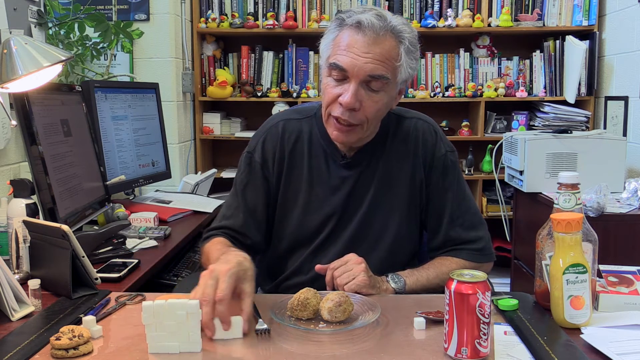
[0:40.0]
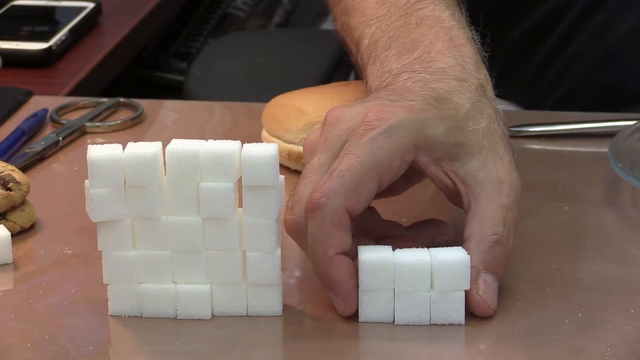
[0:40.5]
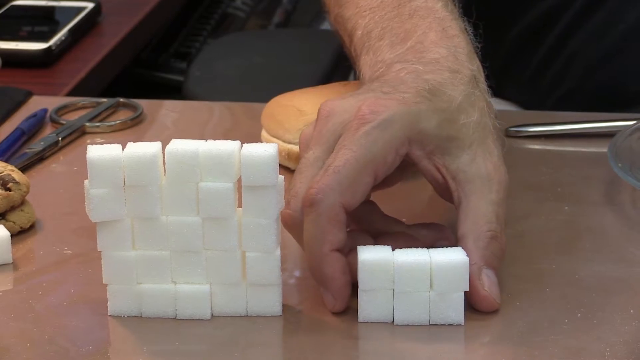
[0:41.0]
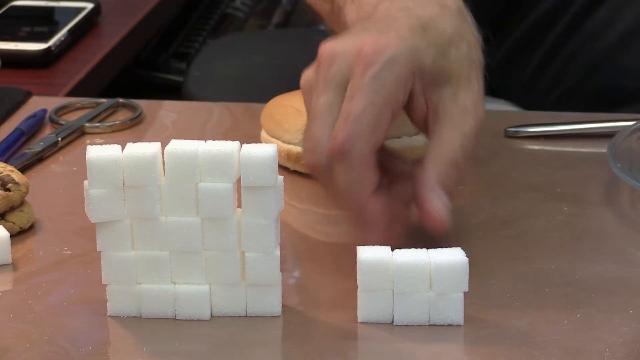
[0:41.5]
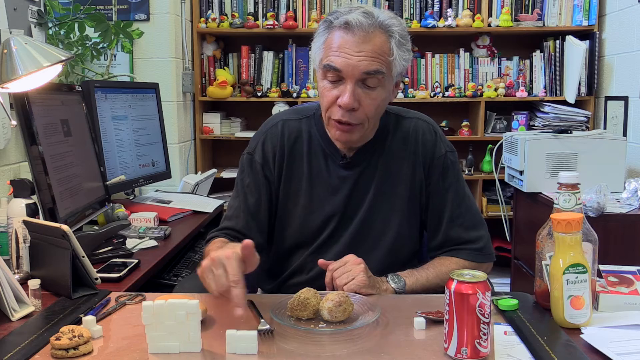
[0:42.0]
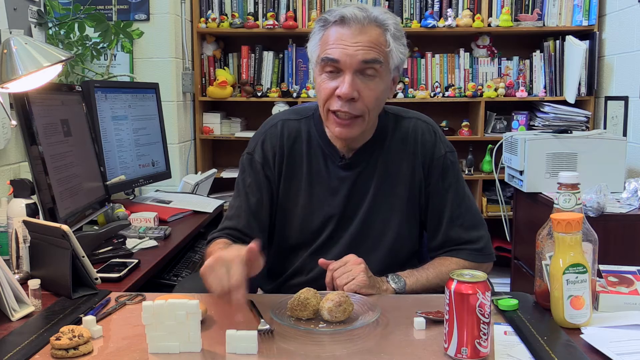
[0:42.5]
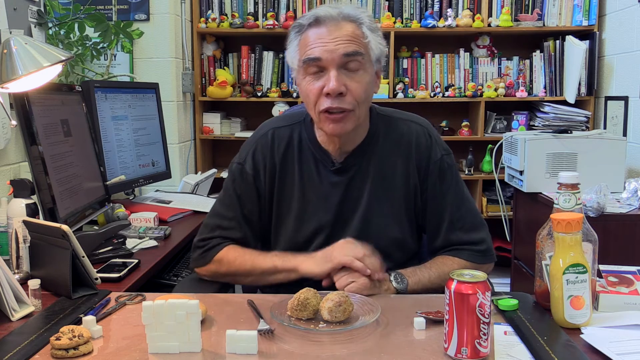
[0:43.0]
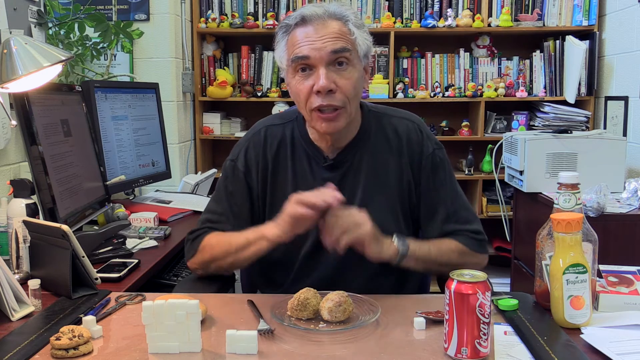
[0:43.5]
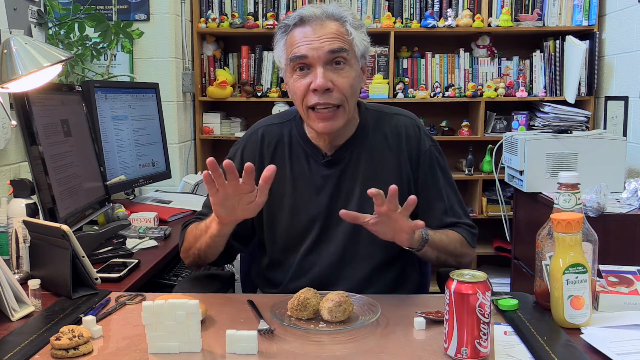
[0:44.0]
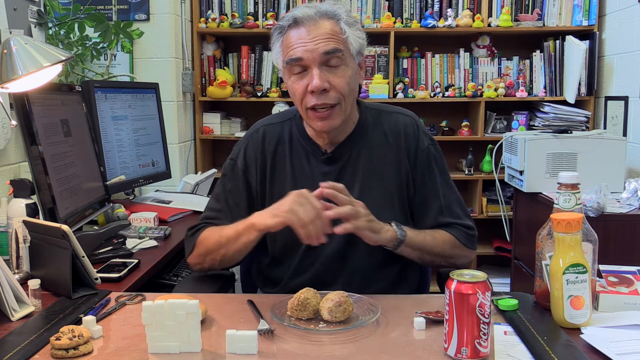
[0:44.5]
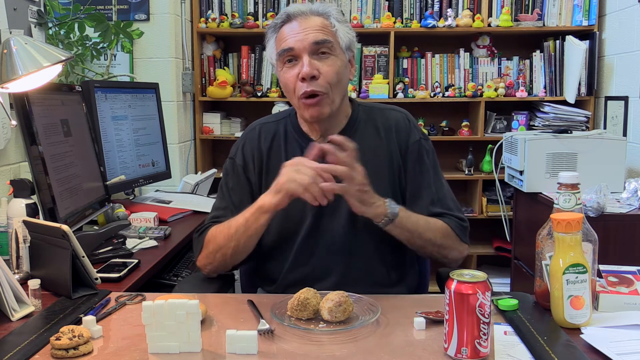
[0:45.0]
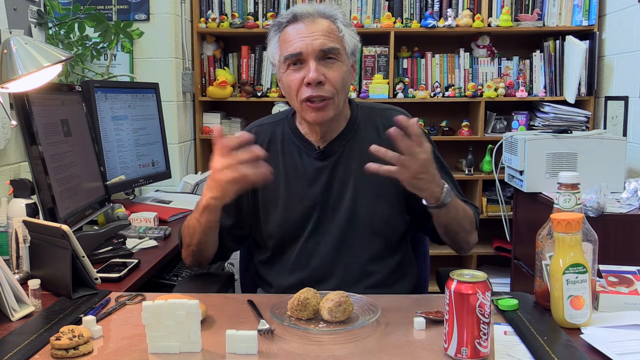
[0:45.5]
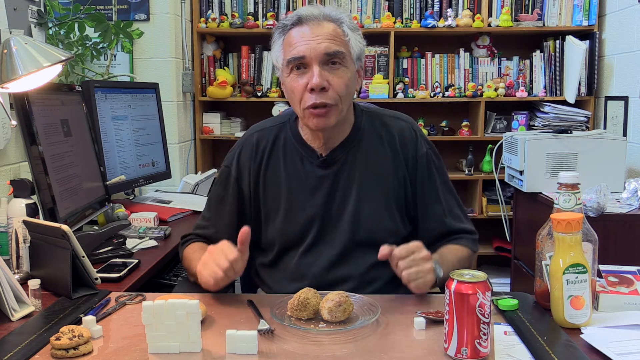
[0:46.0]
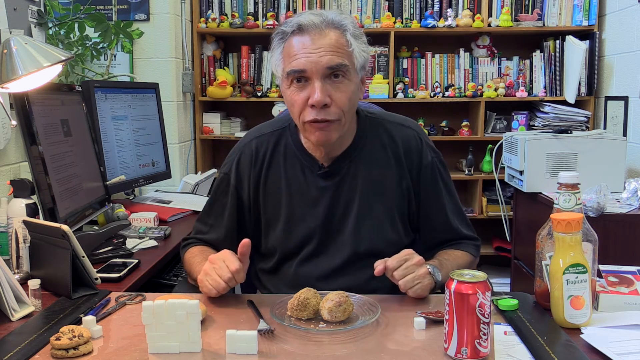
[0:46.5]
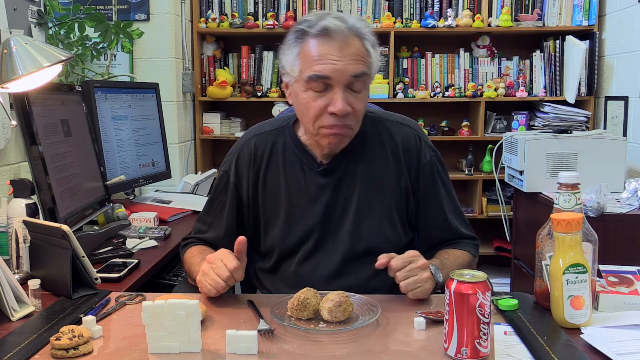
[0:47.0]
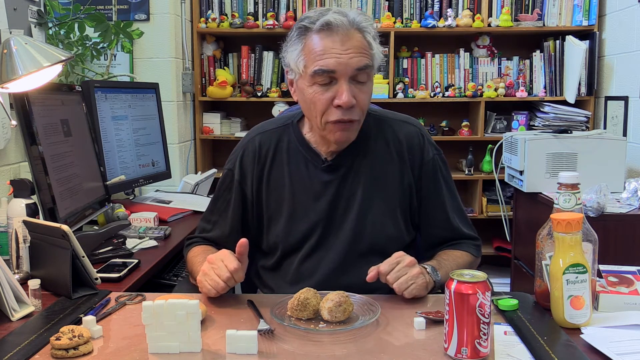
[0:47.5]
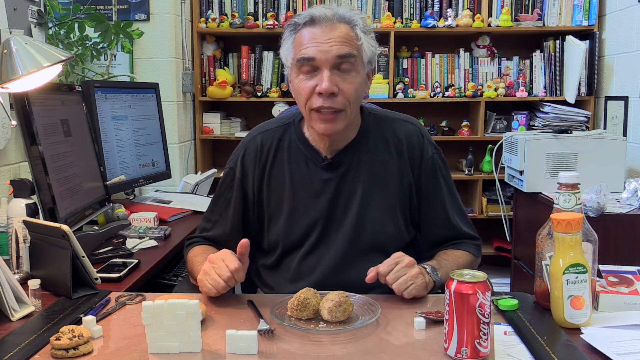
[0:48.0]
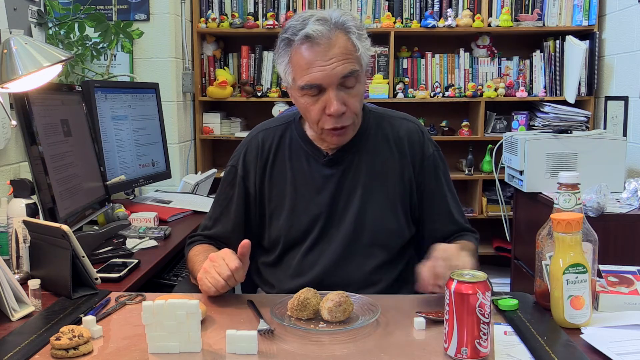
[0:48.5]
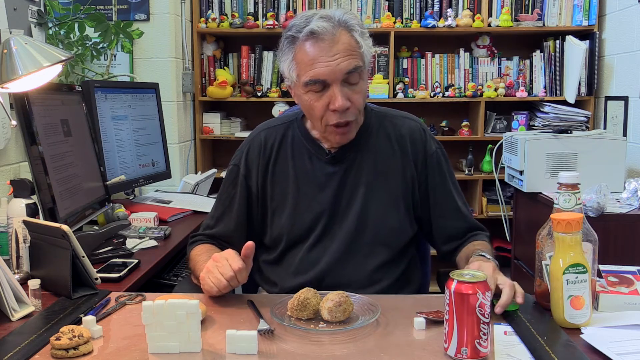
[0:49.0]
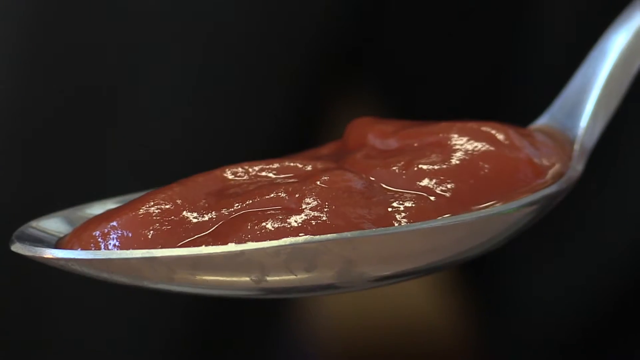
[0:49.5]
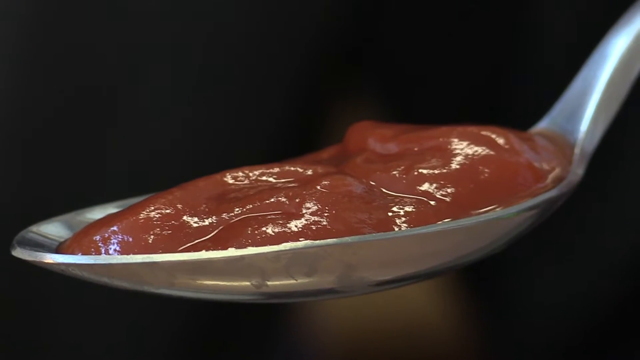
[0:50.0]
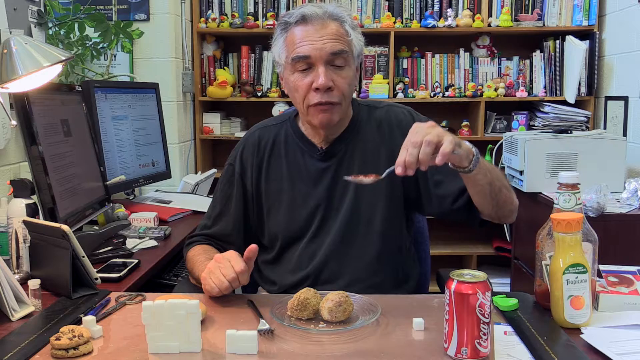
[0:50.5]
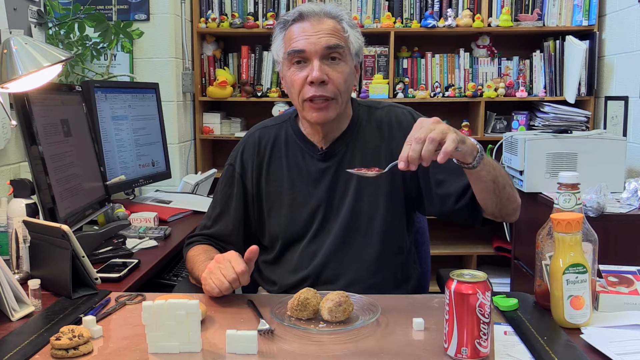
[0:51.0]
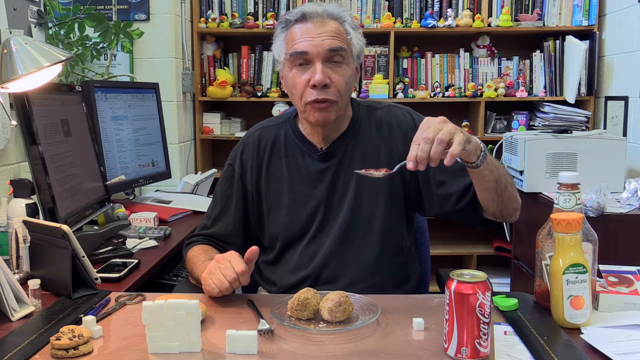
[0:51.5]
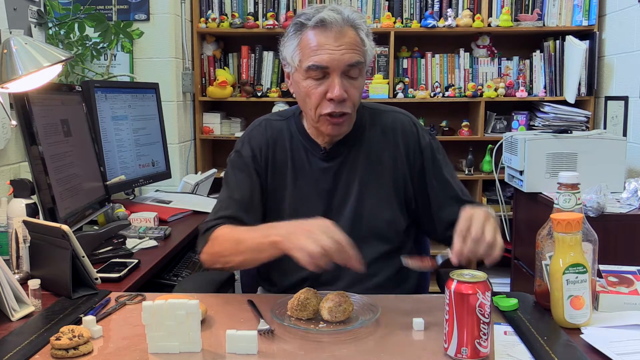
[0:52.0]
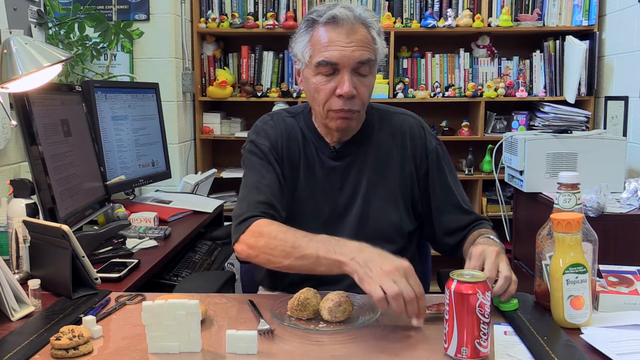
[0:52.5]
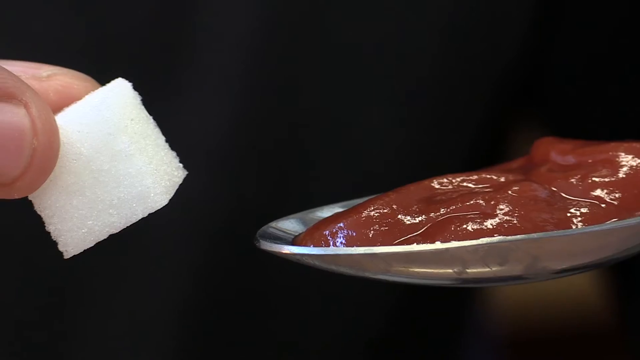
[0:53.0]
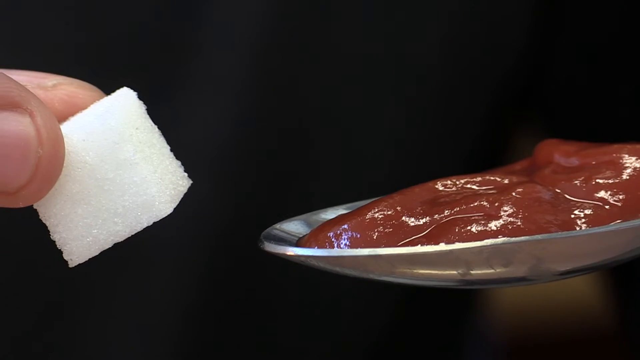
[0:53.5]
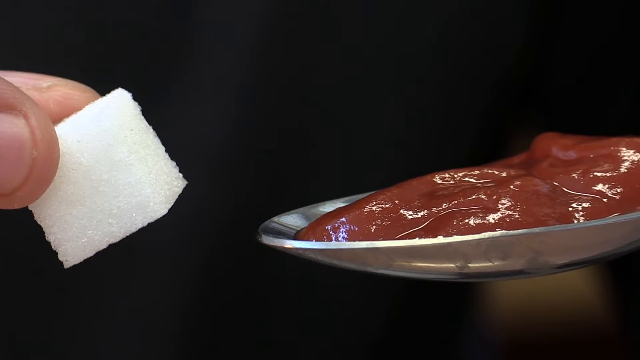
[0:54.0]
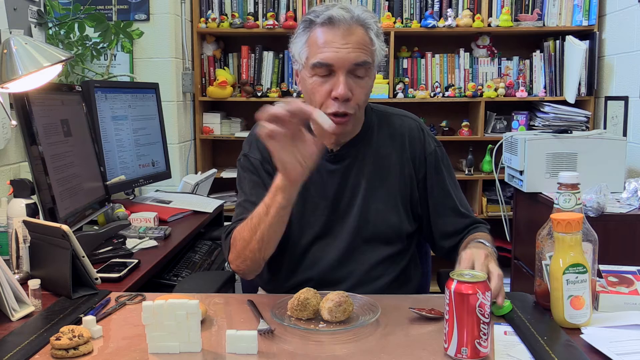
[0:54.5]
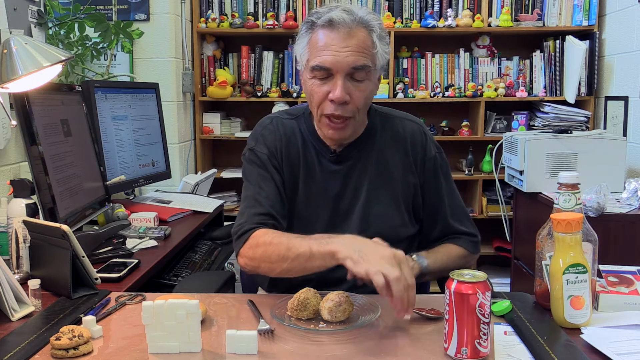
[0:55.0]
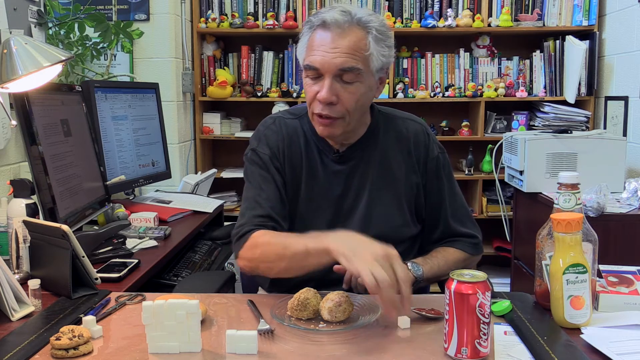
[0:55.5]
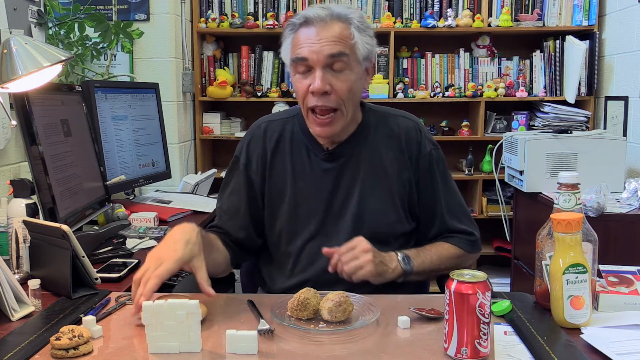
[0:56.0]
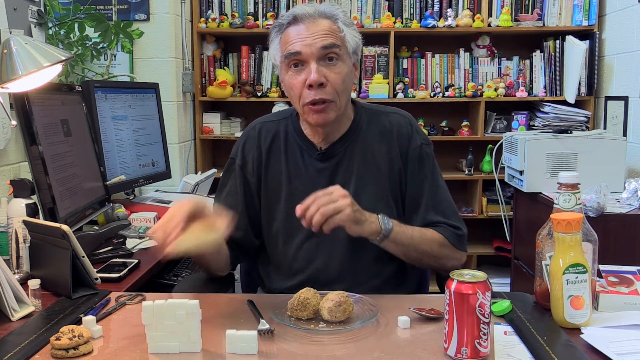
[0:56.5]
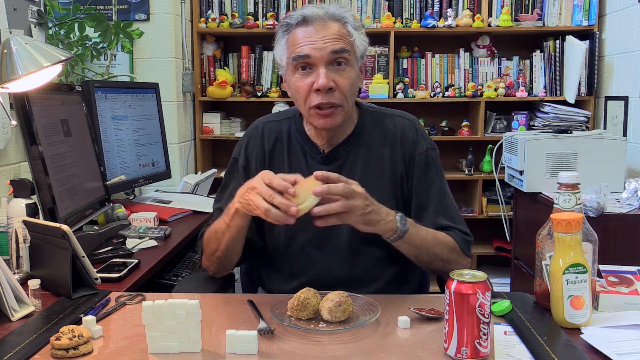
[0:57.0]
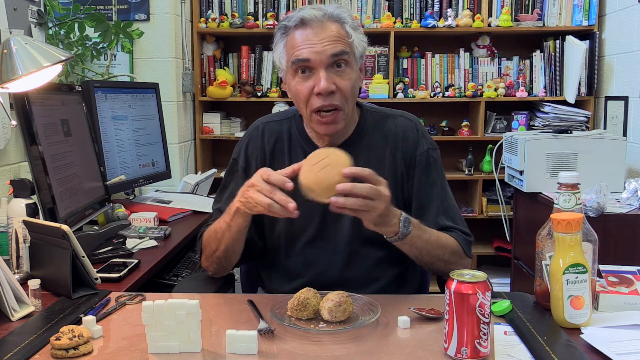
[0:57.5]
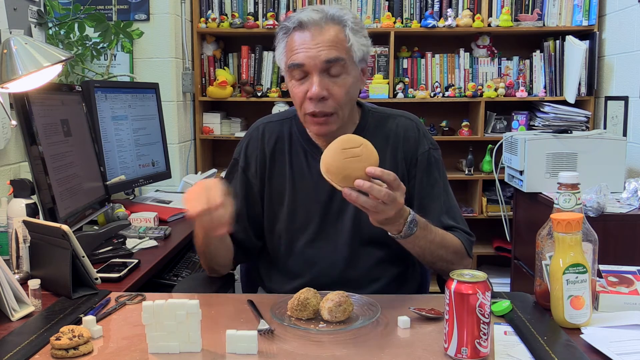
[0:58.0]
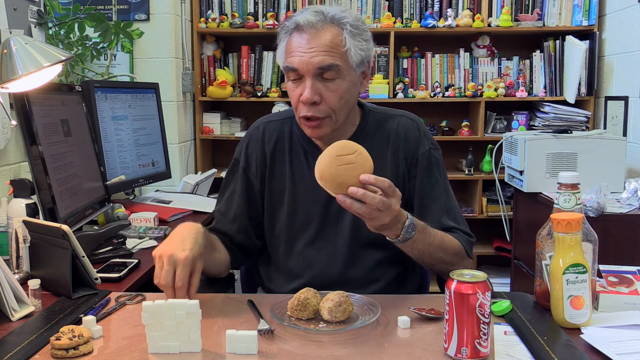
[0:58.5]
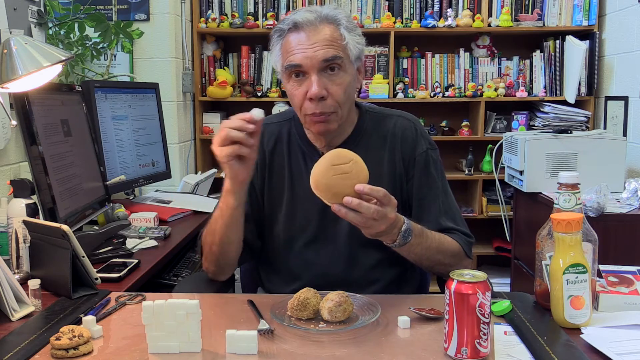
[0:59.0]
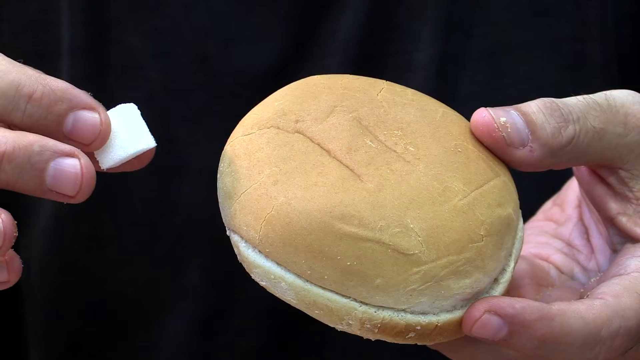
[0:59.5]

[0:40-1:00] The man moves something behind what appears to be a stack of sugar cubes. His office is filled with things and is a very small, kind of cramped space, with two computer screens, a phone, a tablet, pictures on the wall, and a light kind of coming over one side of the desk. On the desk are a clear plate with two balls of some type of food, a stack of sugar cubes, a red Coca-Cola can, something green that almost looks like a lollipop but is not really discernible, a Tropicana orange juice bottle, and a large Heinz ketchup jar that appears to be almost used up. In the background are a printer, several papers on the shelf on top of the printer, a whole bunch of rubber duckies on the shelf at the back, several books, and what appears to be some type of tapes. A close-up shows the sugar cubes, and he divides off a few of them to a smaller area. There is also a stack of cookies. He holds a spoon with a large amount of chocolate on it, and the spoon and the sugar are shown on screen together. Then he picks up a bun along with sugar and shows them in close-up, as if comparing the two.